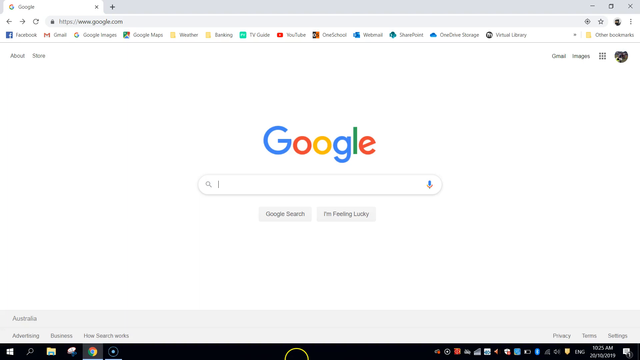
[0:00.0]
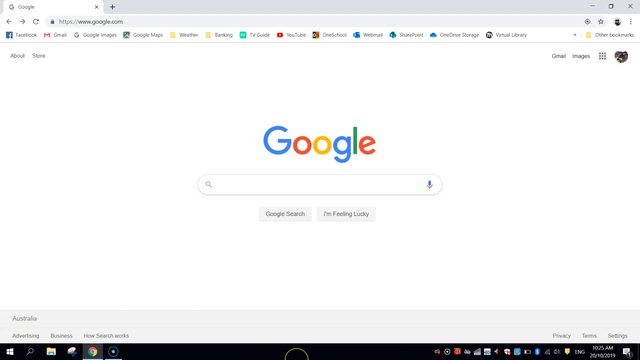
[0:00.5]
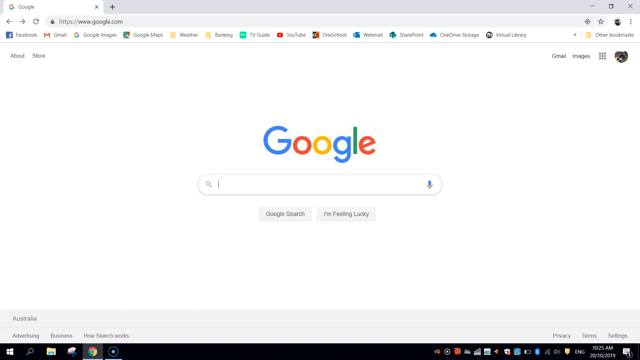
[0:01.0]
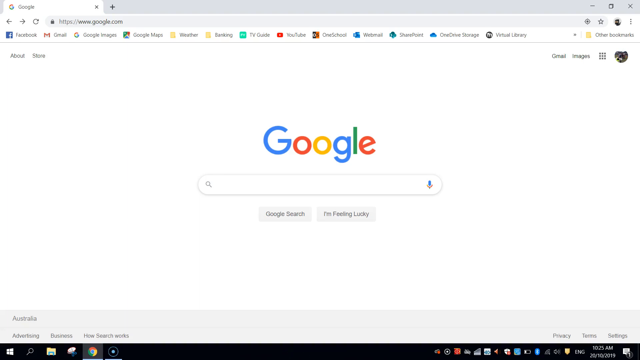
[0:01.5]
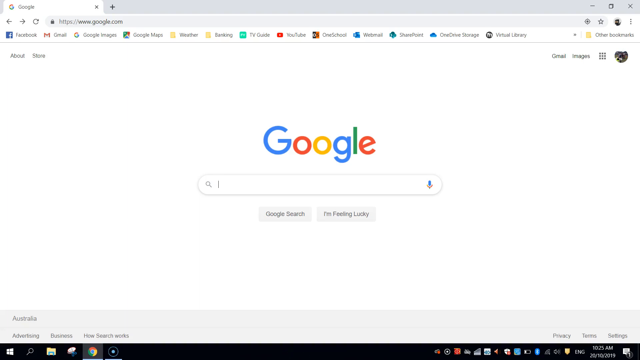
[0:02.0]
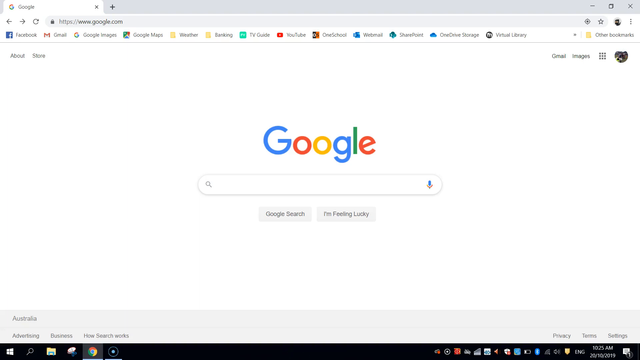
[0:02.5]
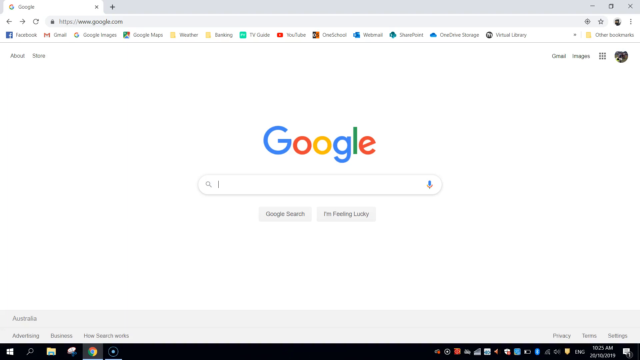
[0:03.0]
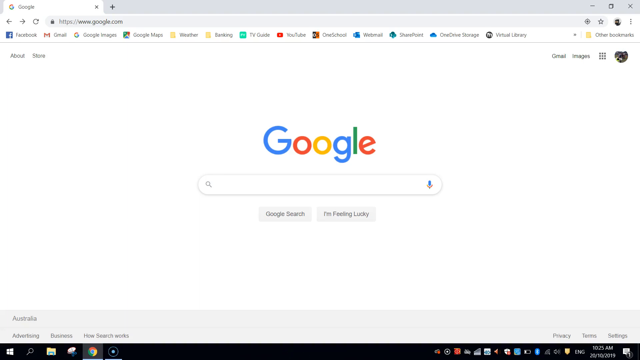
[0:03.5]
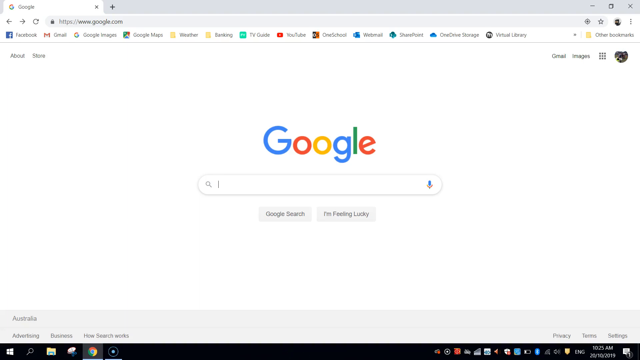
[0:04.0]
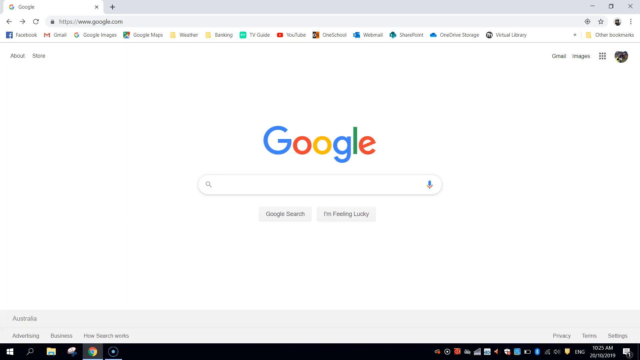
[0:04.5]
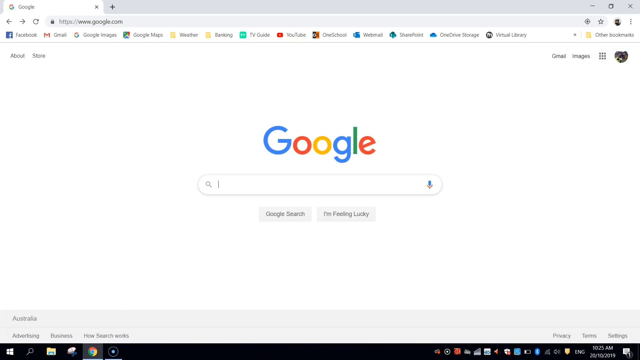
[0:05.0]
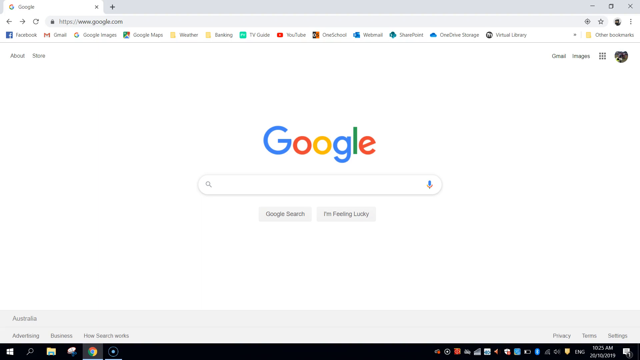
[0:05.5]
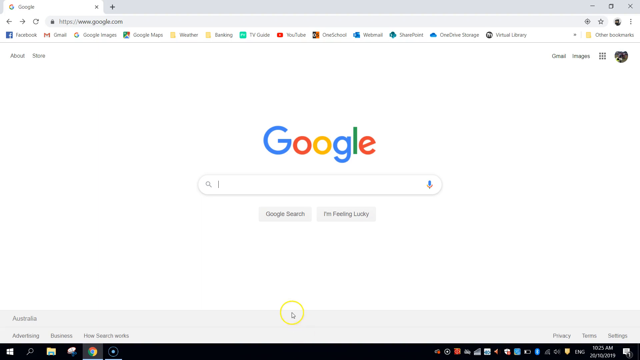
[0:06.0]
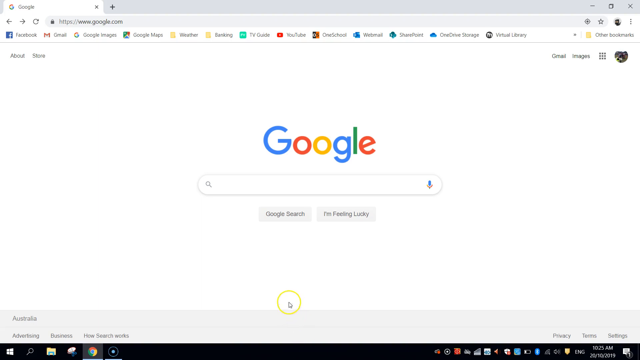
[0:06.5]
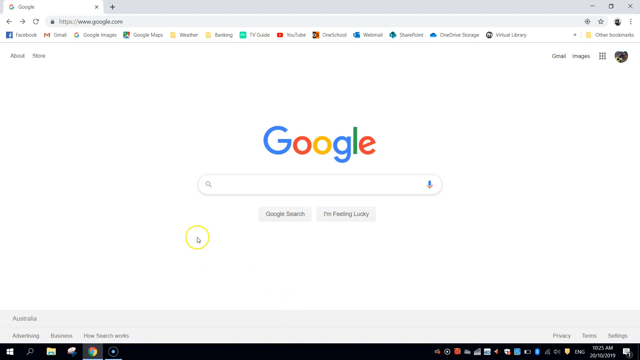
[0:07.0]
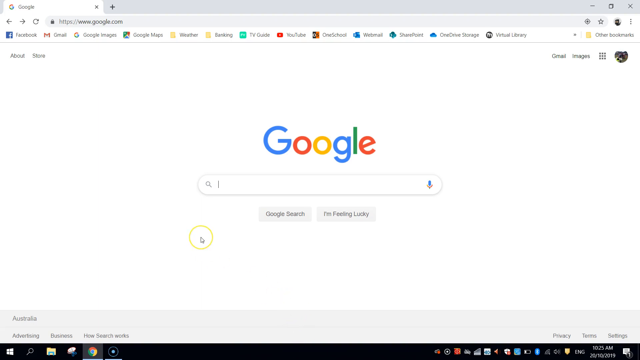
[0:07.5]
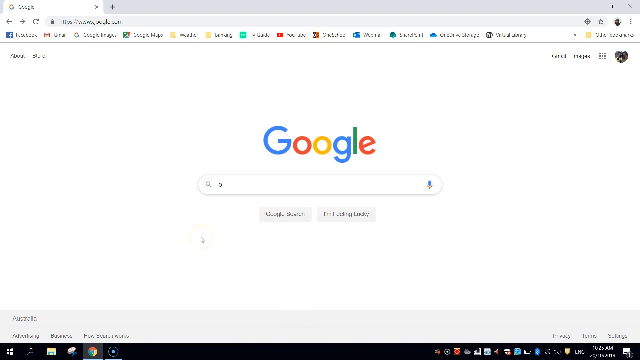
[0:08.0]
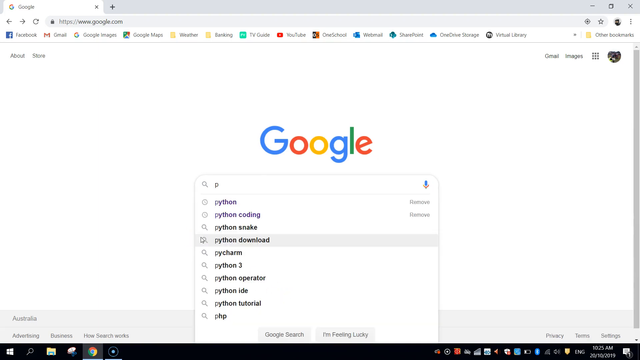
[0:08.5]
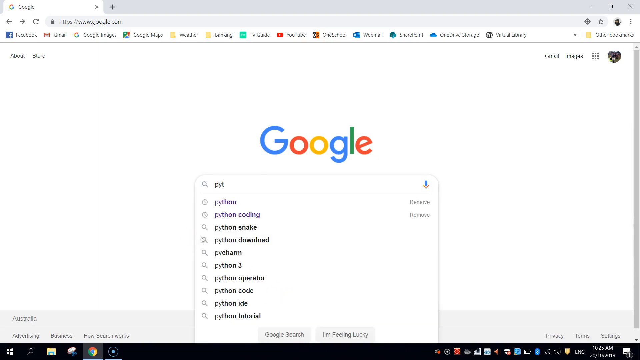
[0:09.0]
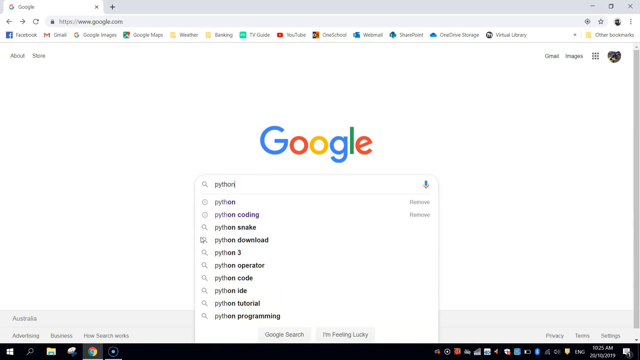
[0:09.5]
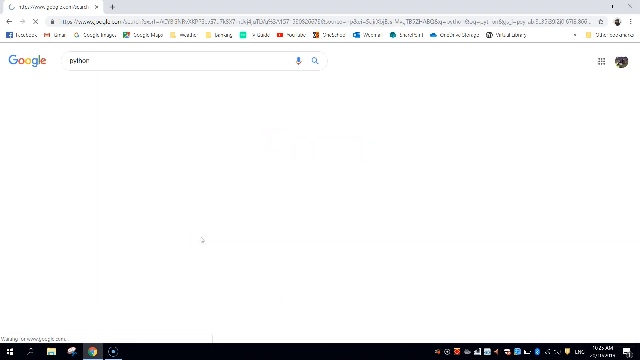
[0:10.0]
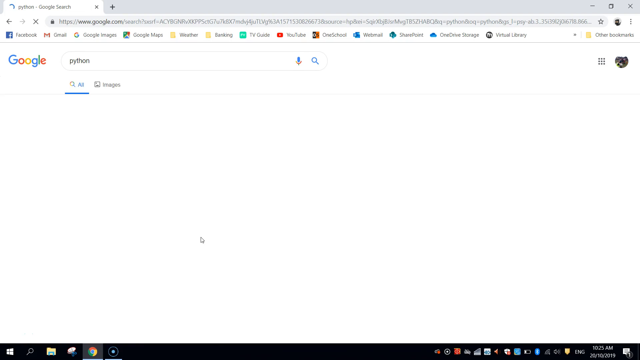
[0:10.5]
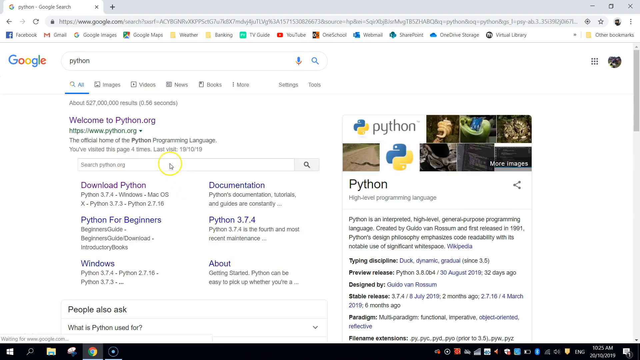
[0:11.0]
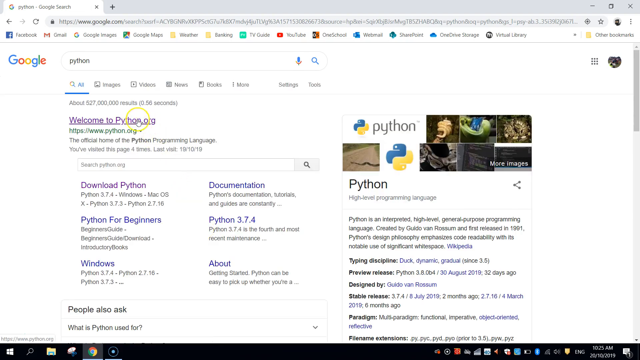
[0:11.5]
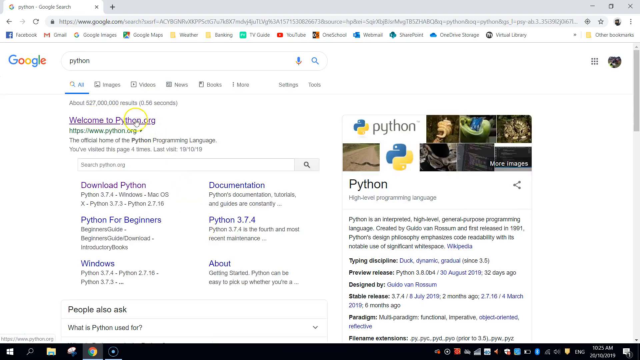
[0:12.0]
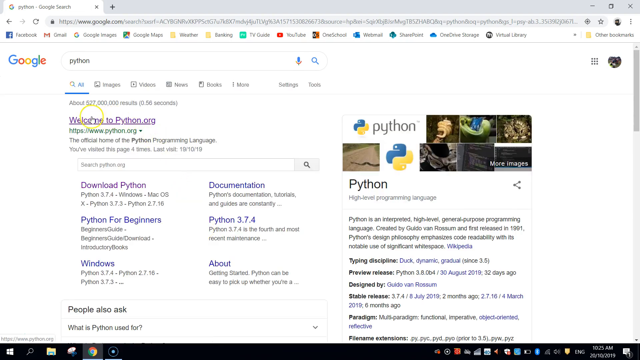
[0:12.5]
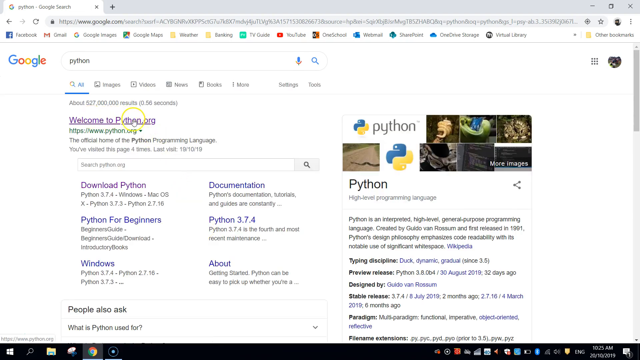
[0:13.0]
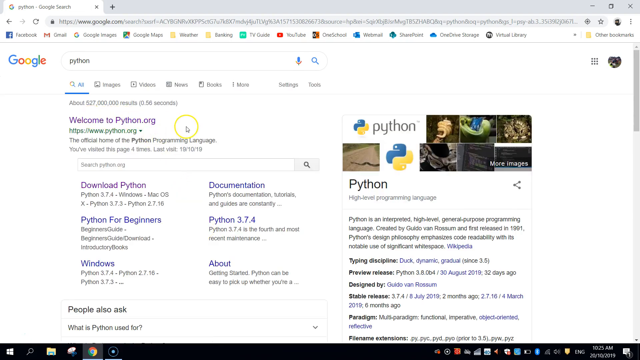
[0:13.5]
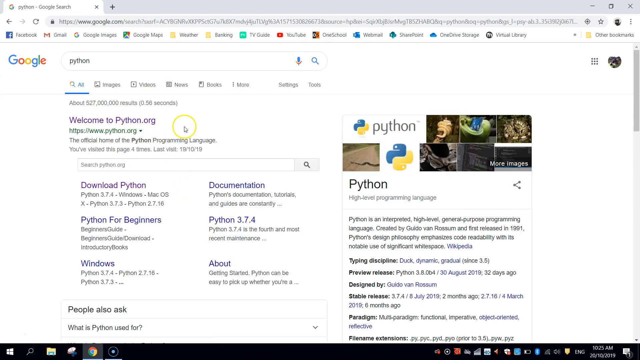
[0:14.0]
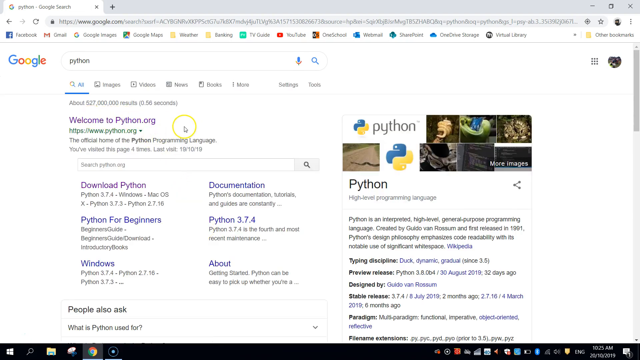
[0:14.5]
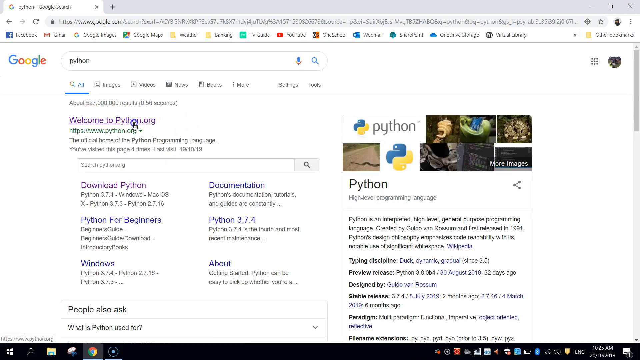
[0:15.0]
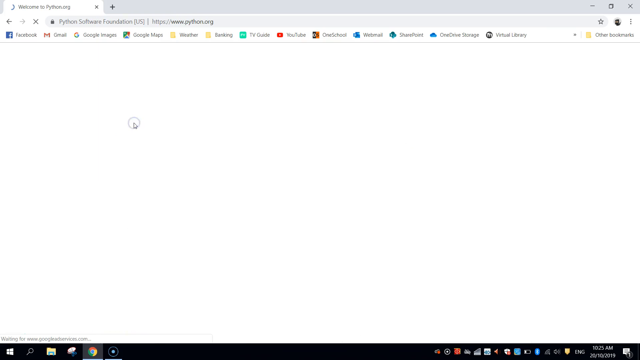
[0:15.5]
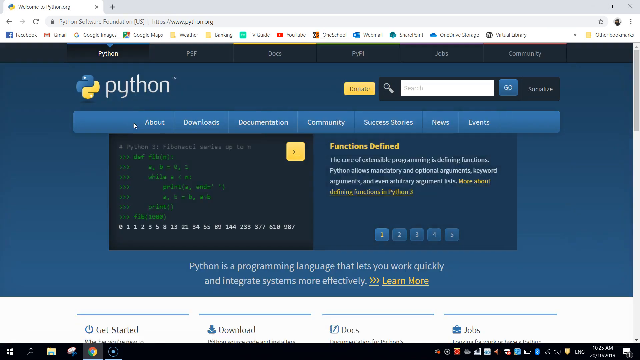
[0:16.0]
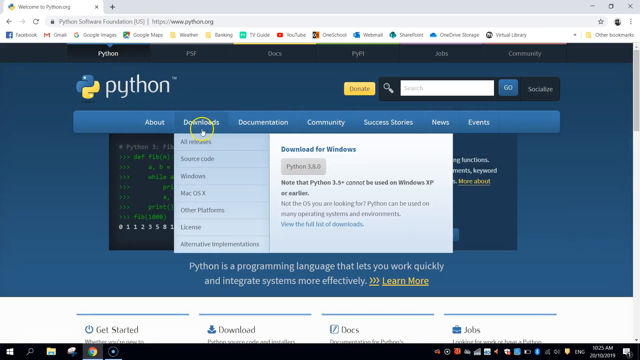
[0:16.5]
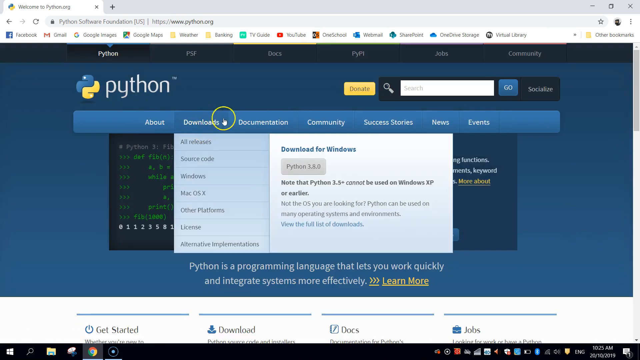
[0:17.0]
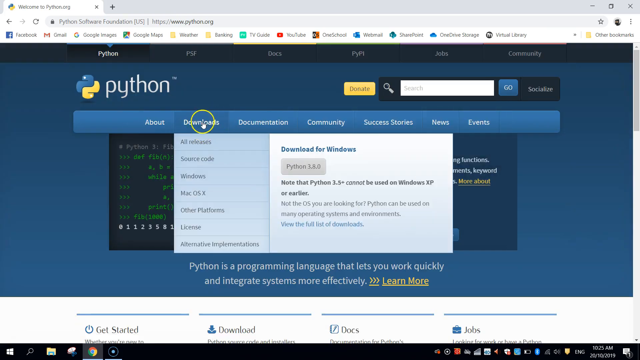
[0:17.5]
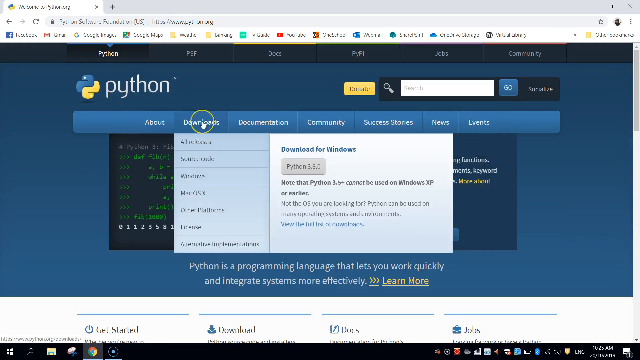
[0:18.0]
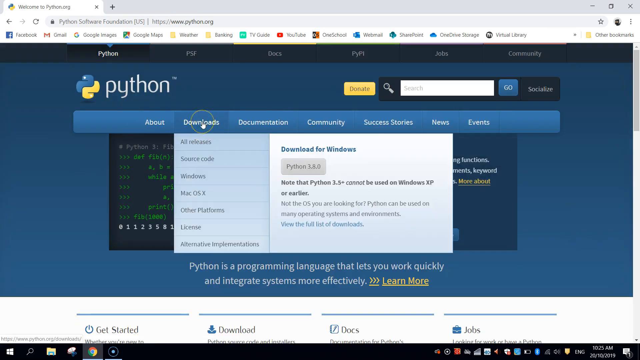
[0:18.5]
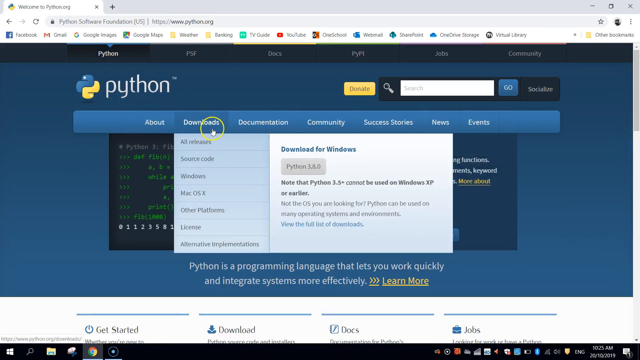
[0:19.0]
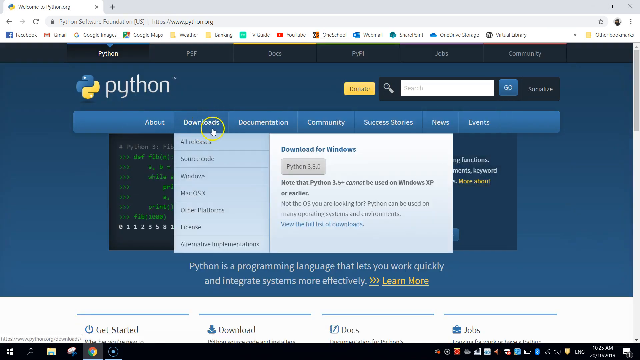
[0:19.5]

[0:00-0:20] A computer browser screen recording opens on Google, where the user types Python into the search bar and clicks the first link that appears, welcome to python.org. On the Python website, the user clicks the download section, which shows options to click such as all releases, secure code, Windows, Mac OS X, other platforms, license, and alternative implementations. The website is blue-themed, with lots of code all over, various docs and information about Python, the logo at the top left, and a search bar. Other sections include About, Downloads, Documentation, Community, Success Stories, News, and Events. Under Download, a window pops up that says "Download for Windows Python 3.8.0" and gives some information notes on downloading Python on Windows and what can and cannot be downloaded.